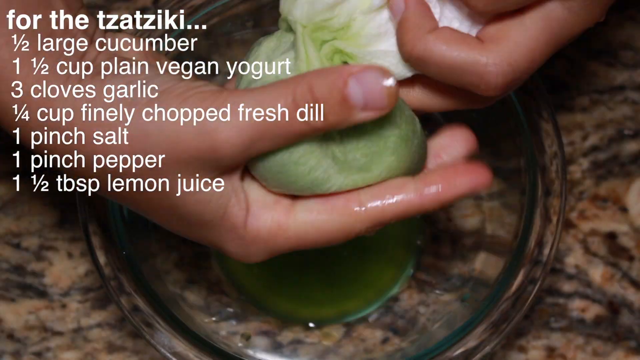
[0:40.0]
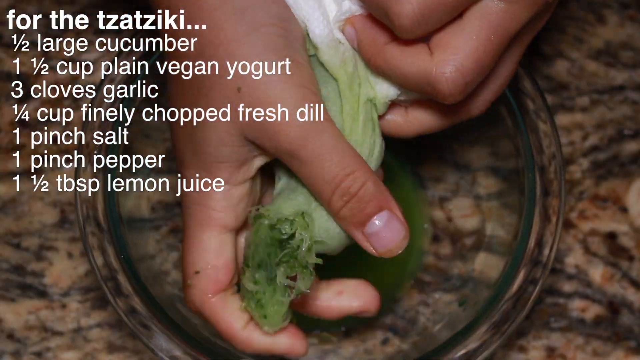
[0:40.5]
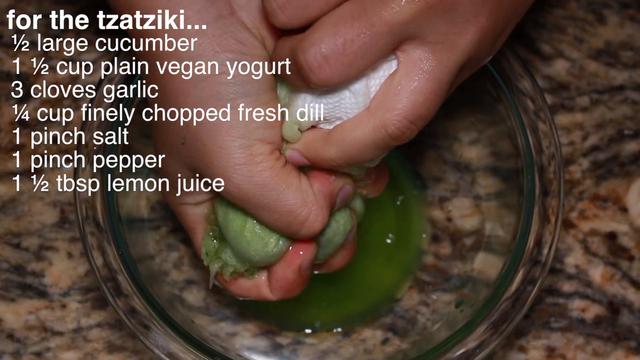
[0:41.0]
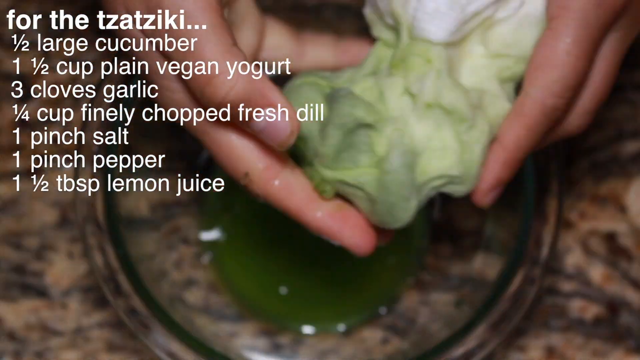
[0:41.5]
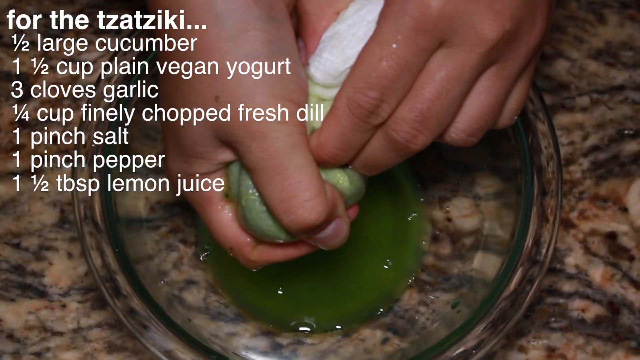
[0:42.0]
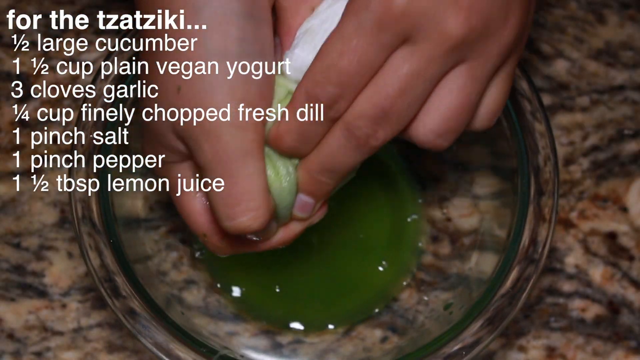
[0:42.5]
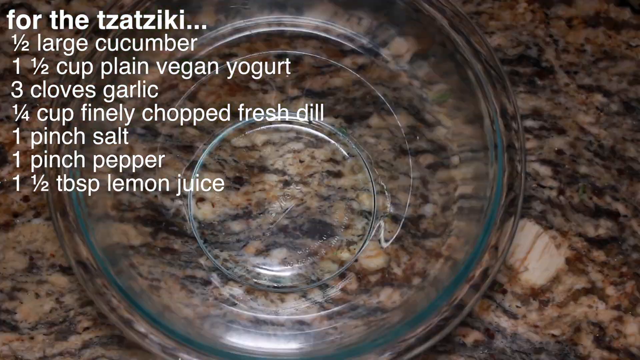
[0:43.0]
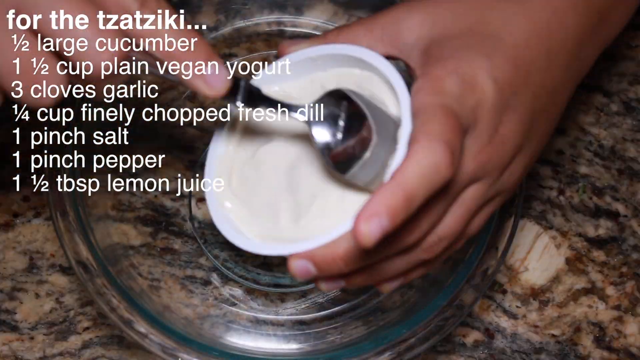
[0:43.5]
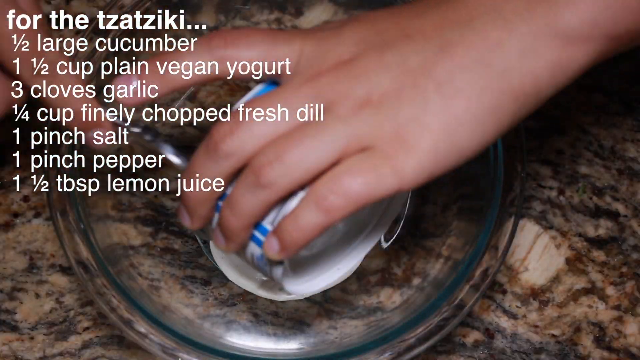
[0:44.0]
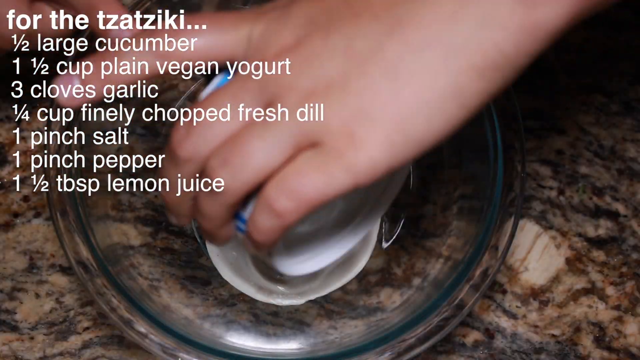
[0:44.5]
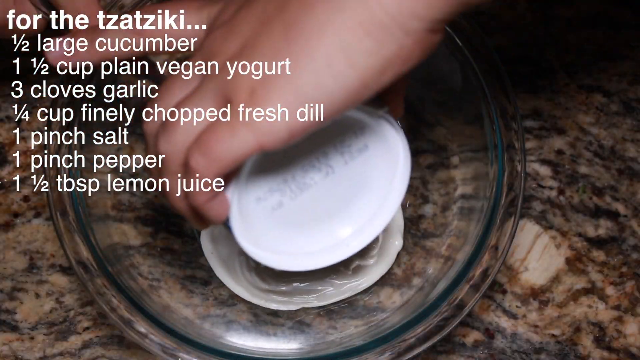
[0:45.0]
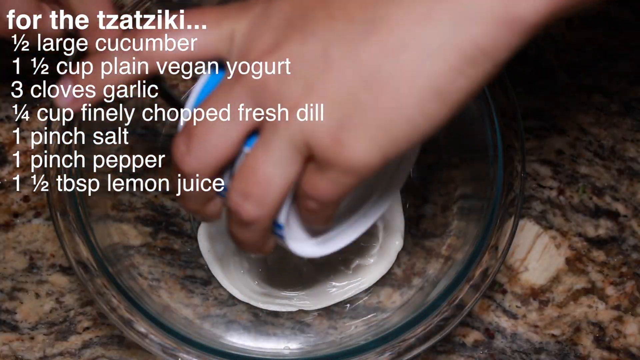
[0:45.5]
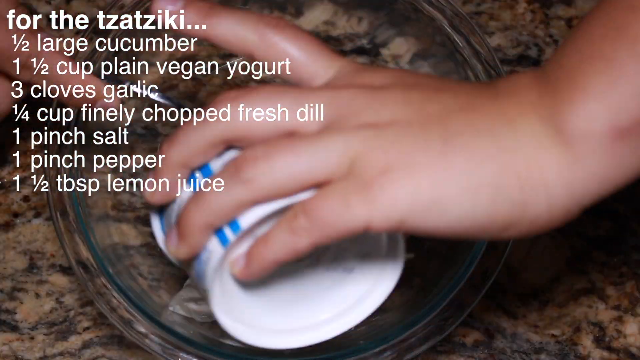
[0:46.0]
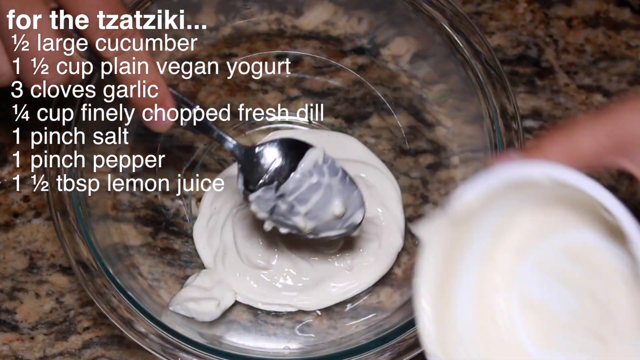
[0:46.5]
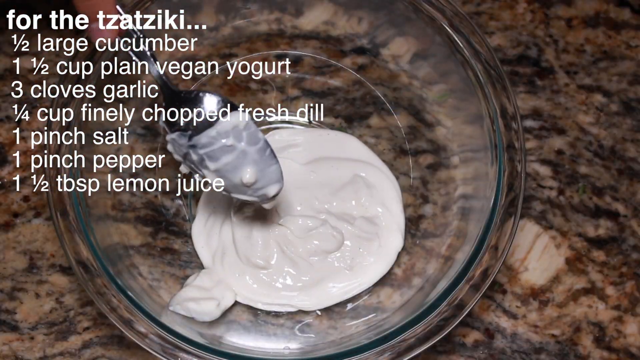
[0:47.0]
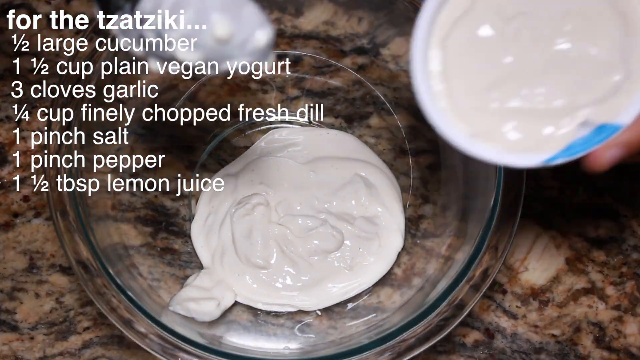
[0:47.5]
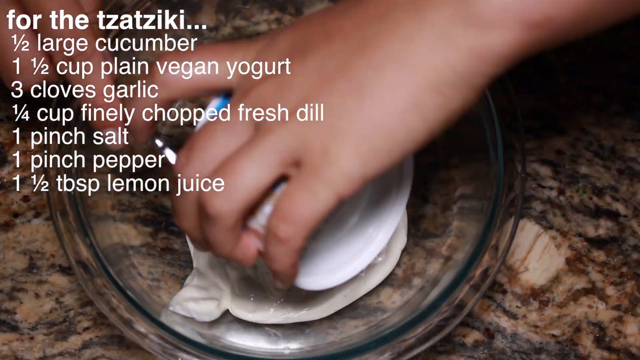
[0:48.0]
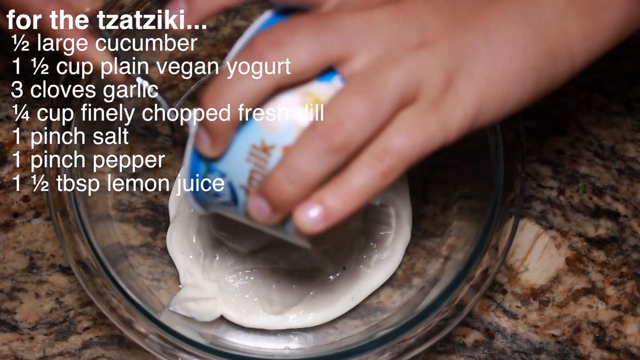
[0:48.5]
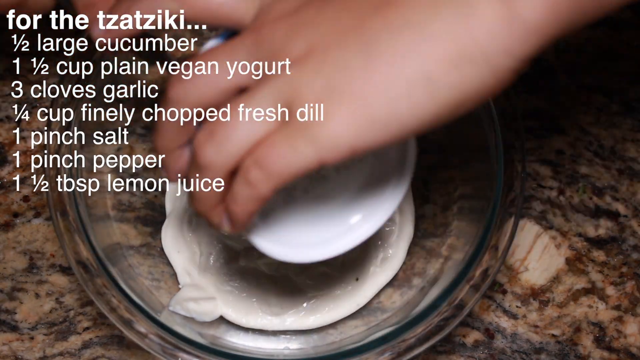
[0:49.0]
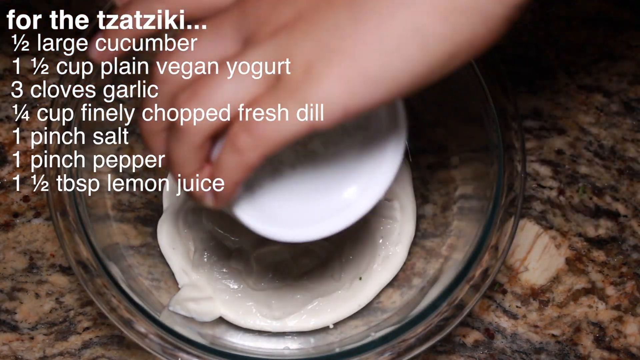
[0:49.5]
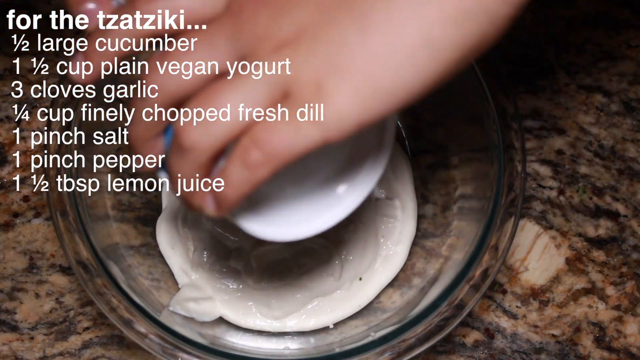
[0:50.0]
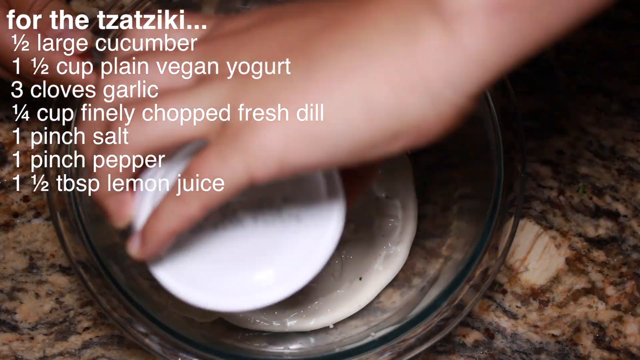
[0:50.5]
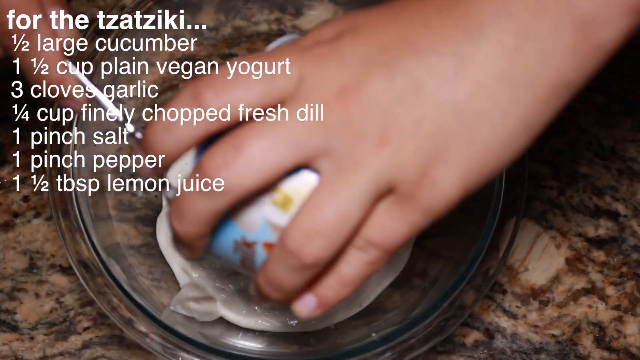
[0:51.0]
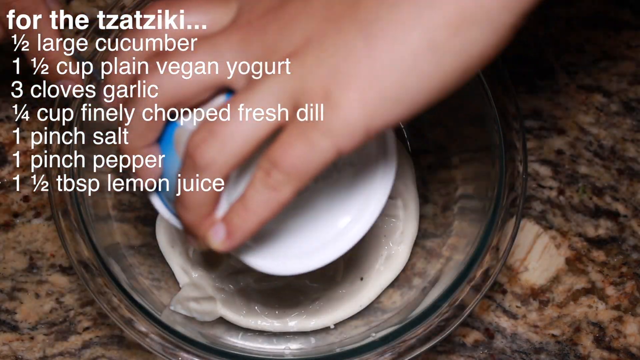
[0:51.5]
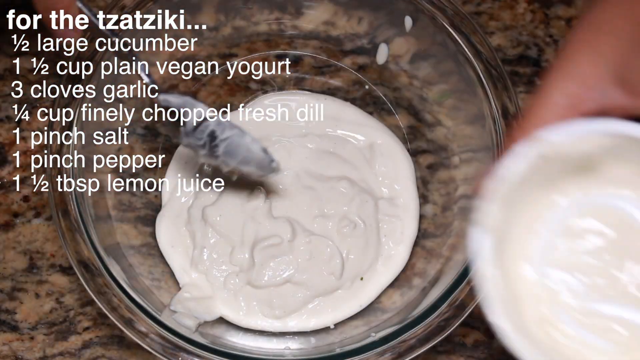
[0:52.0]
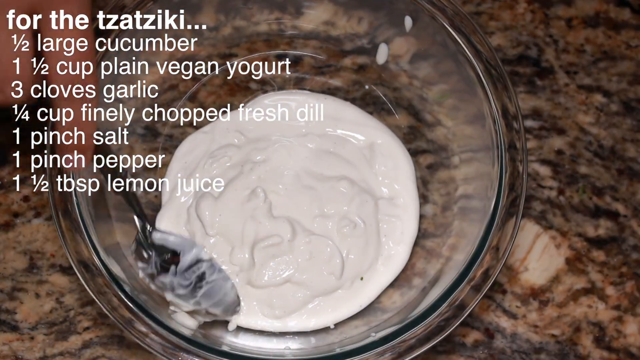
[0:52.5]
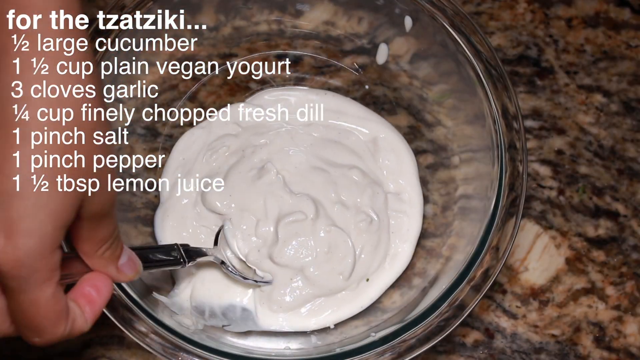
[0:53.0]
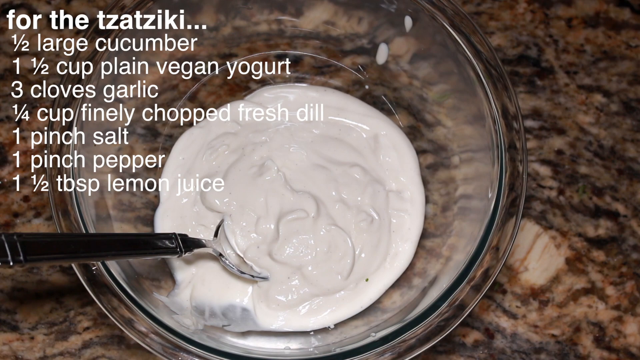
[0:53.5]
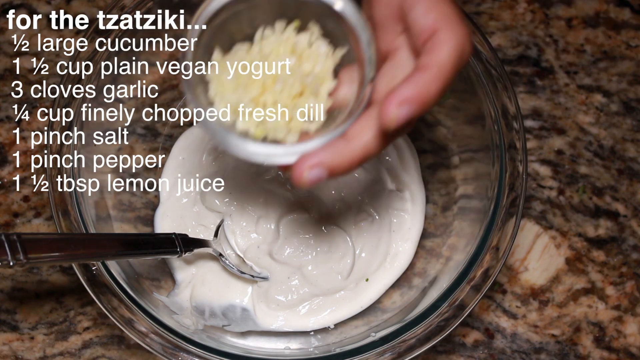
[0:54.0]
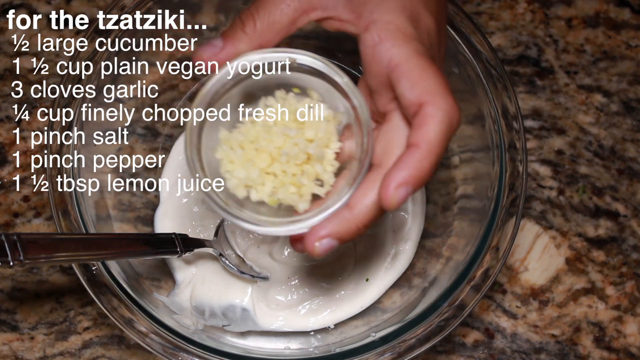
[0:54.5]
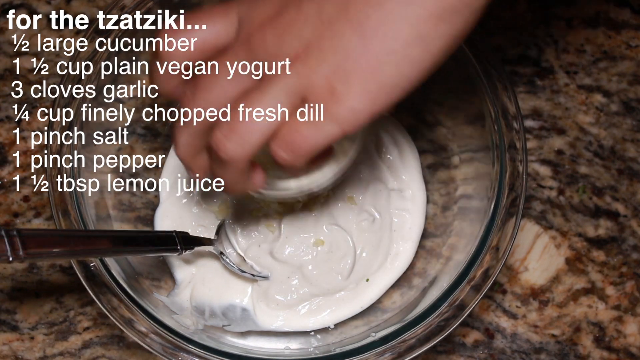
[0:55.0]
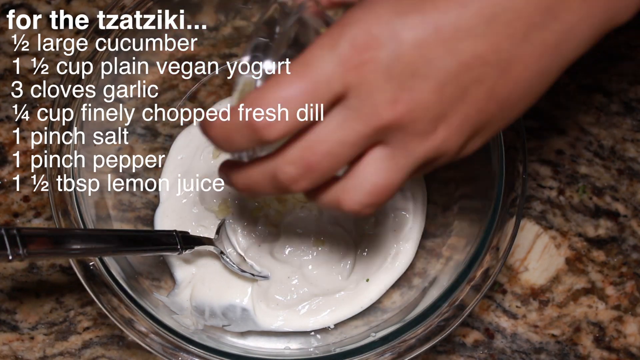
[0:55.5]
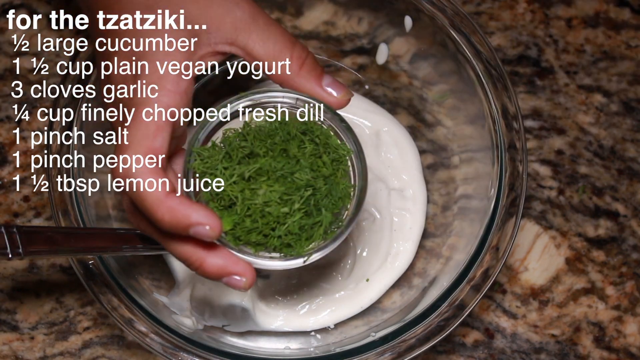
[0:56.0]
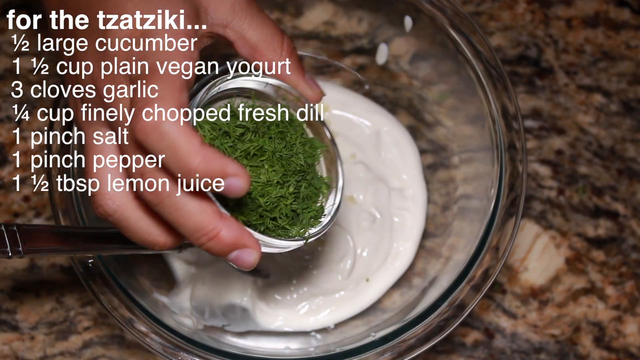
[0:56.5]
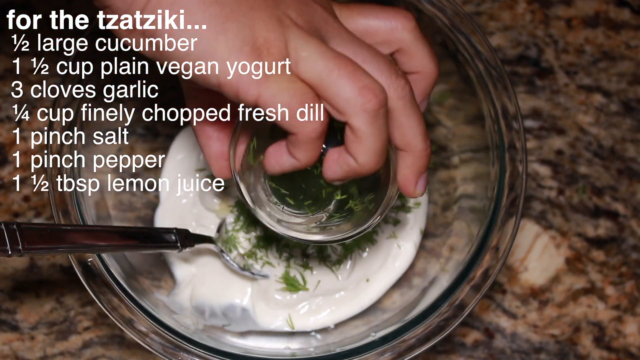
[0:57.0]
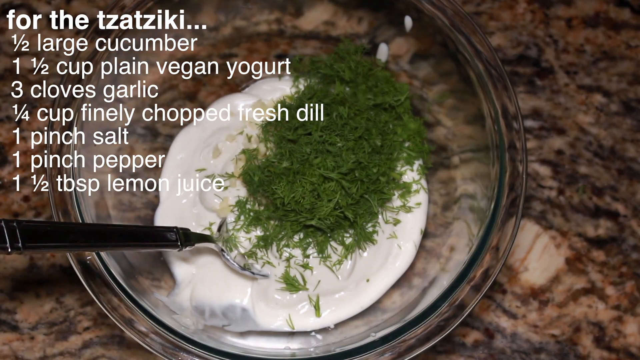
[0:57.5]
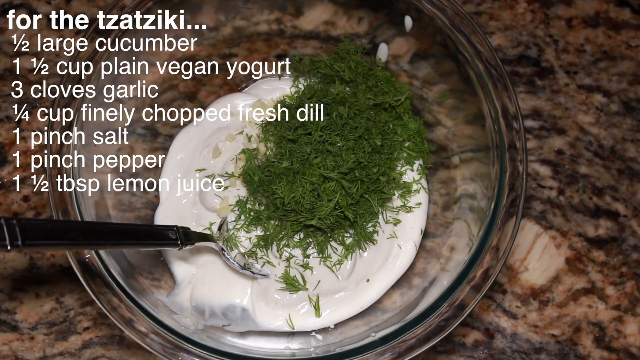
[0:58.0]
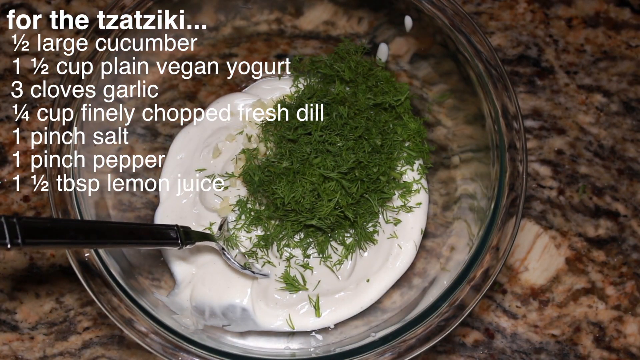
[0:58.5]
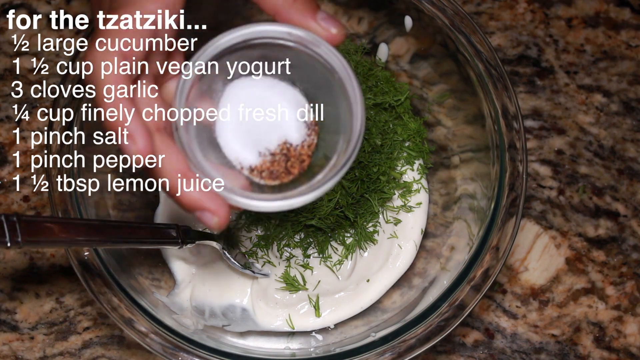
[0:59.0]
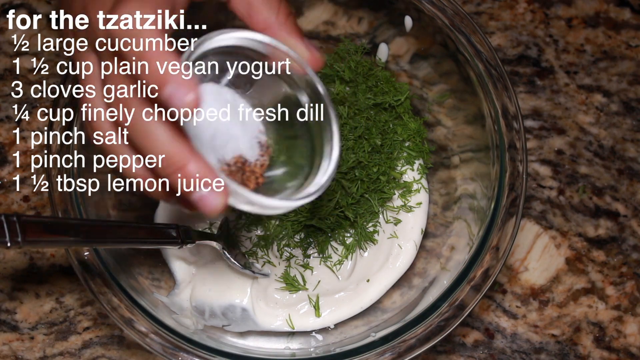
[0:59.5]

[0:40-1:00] In the kitchen, a young white woman, about 25 to 27 years old, with long black hair and a white top, is preparing spicy chickpeas with a tzatziki. Having drained, dried and spiced her chickpeas, she is roasting them in the oven. She now makes the tzatziki: half a large cucumber, which she grates and strains dry in a kitchen cloth to release the fluids, one and a half cups of plain vegan yogurt, three cloves of garlic, a quarter cup of finely chopped fresh dill, one pinch of salt, one pinch of pepper and one and a half tablespoons of lemon juice. She combines all the ingredients in a clear white bowl and mixes them together with a silver tablespoon with a black handle.